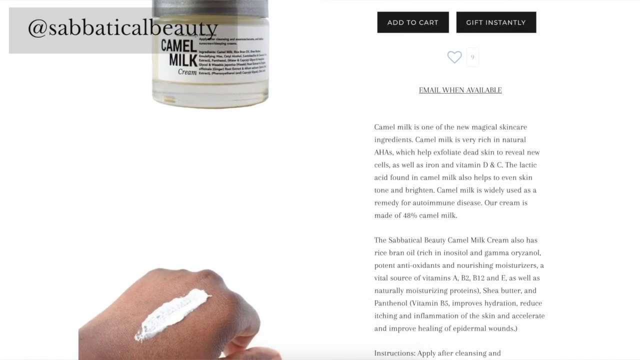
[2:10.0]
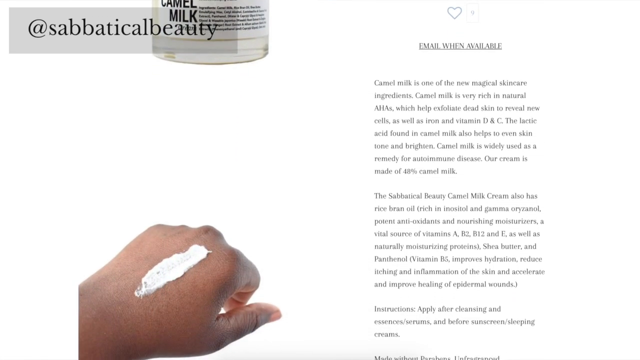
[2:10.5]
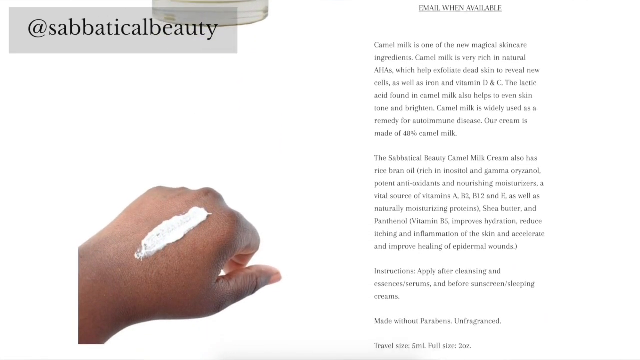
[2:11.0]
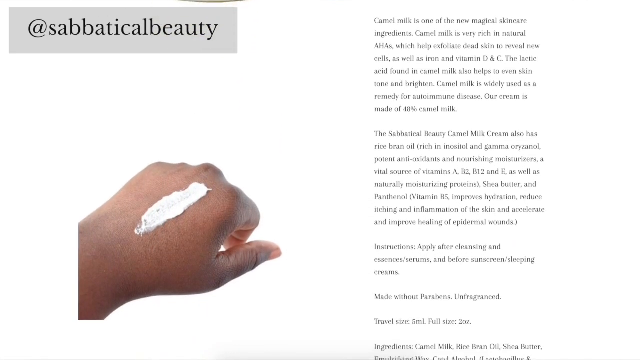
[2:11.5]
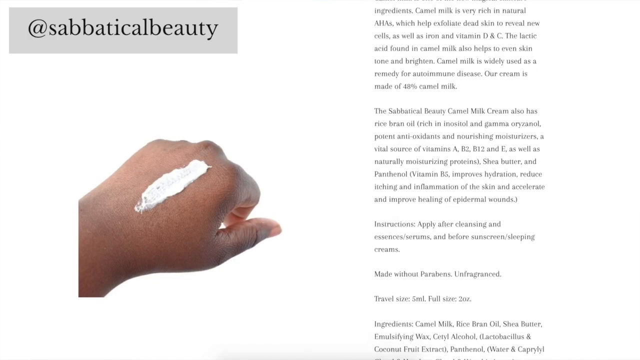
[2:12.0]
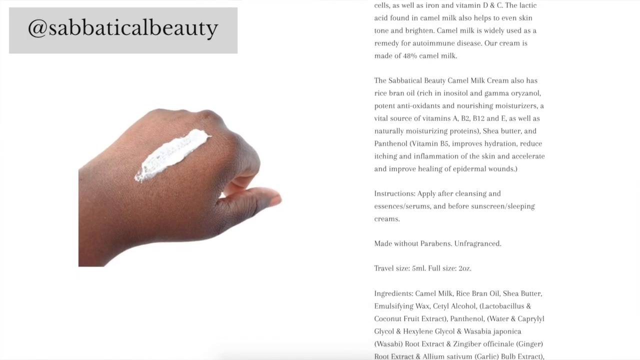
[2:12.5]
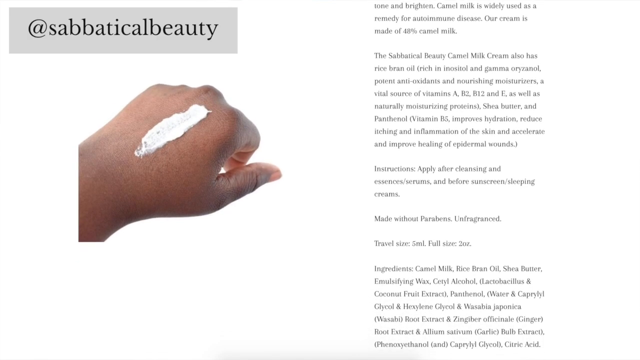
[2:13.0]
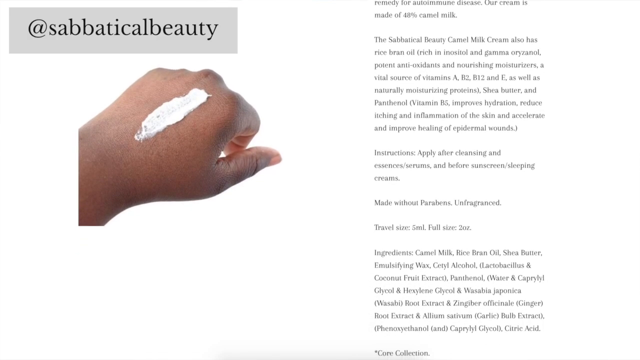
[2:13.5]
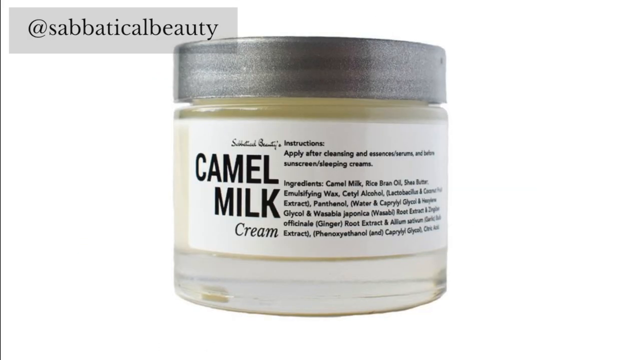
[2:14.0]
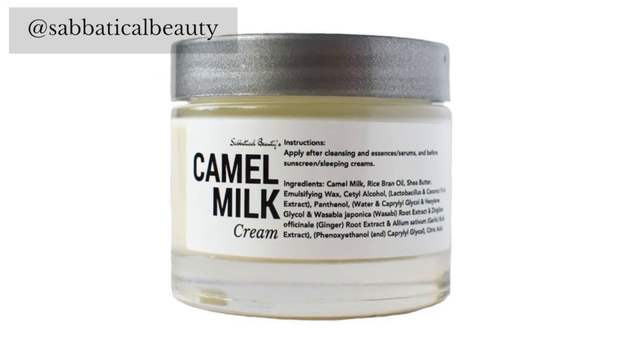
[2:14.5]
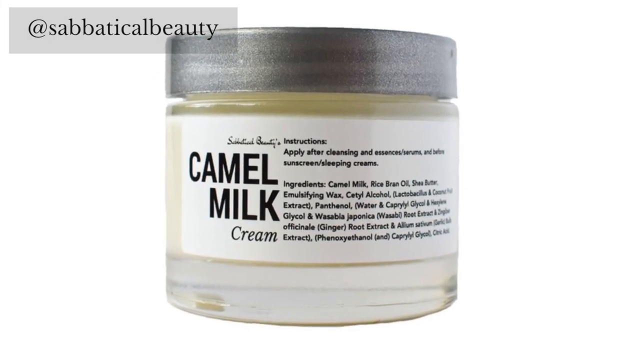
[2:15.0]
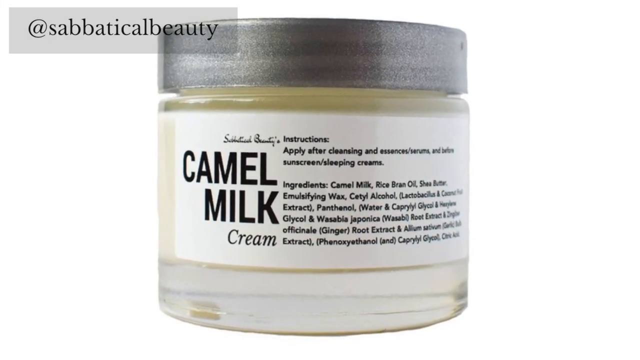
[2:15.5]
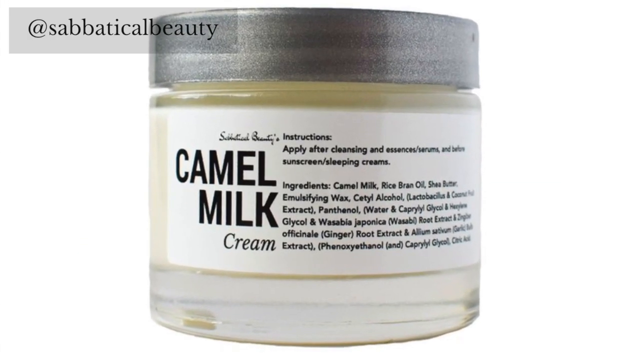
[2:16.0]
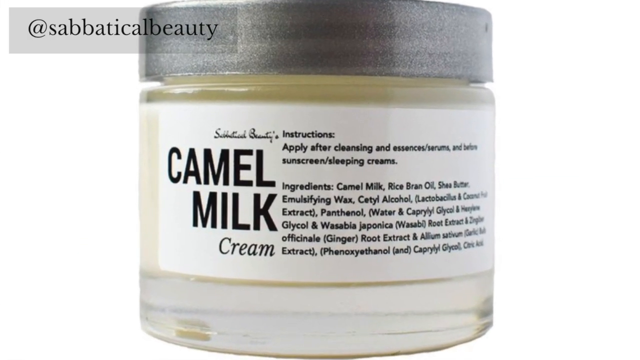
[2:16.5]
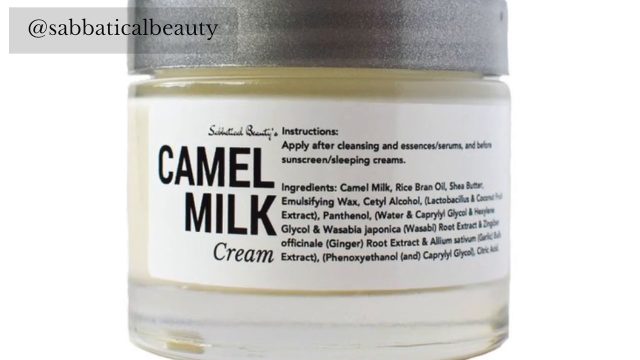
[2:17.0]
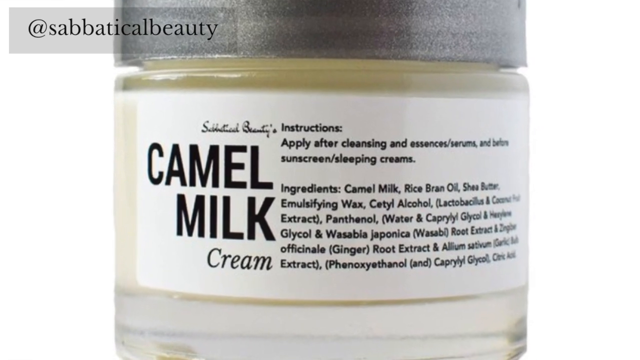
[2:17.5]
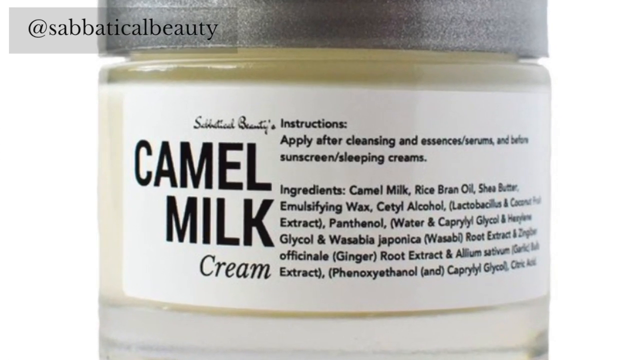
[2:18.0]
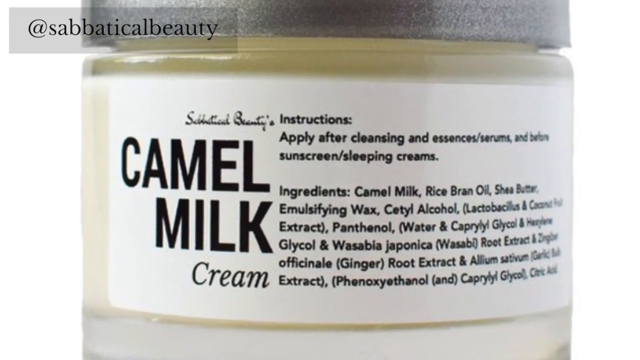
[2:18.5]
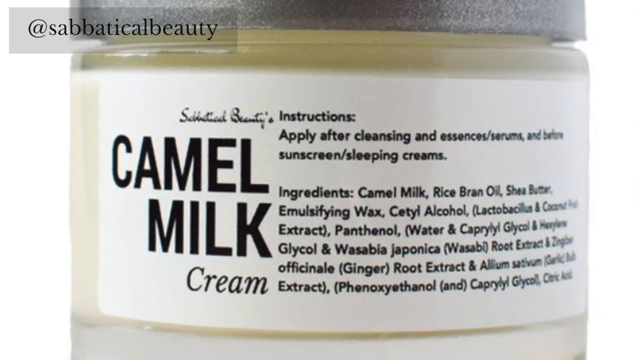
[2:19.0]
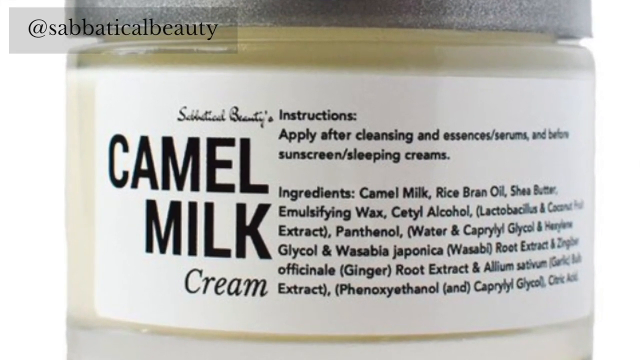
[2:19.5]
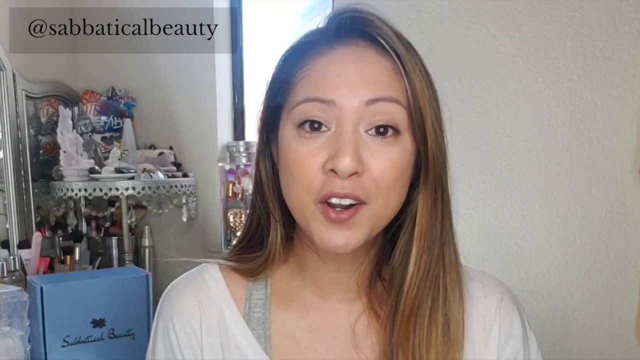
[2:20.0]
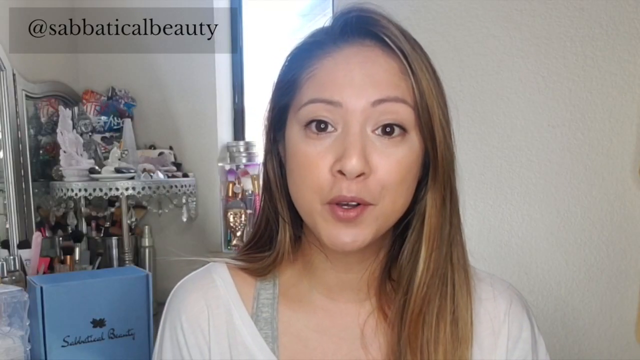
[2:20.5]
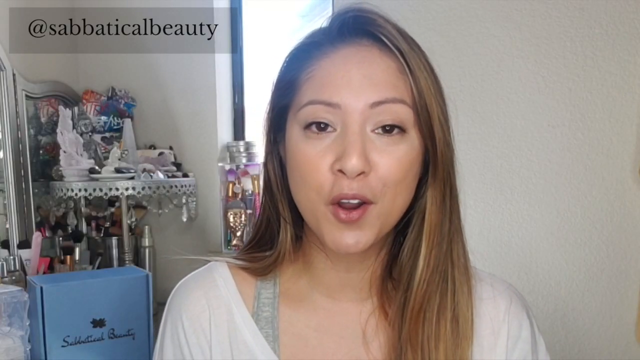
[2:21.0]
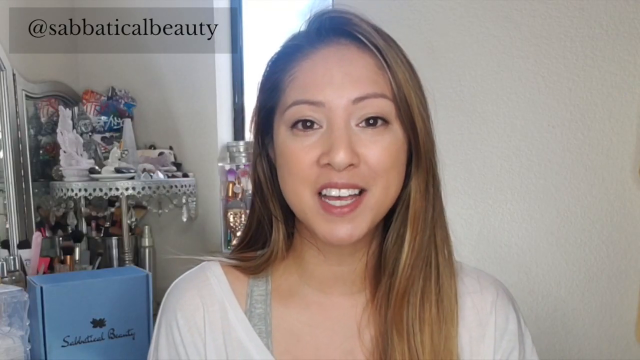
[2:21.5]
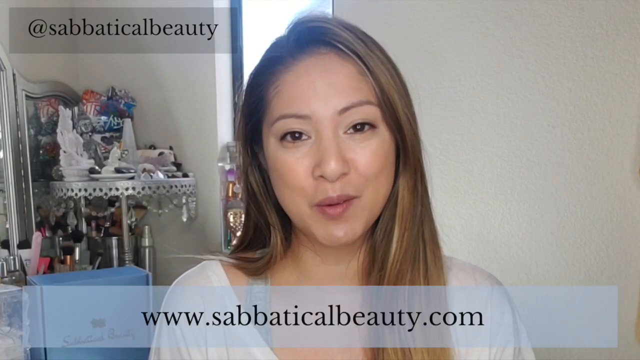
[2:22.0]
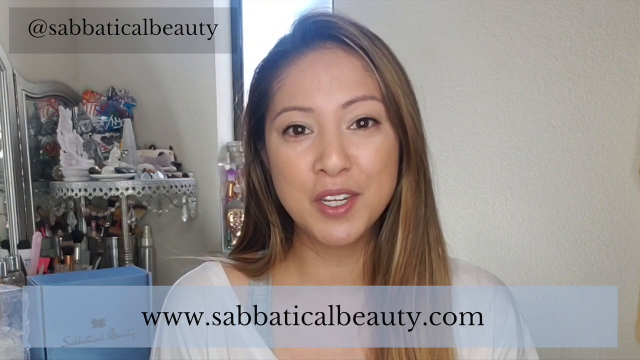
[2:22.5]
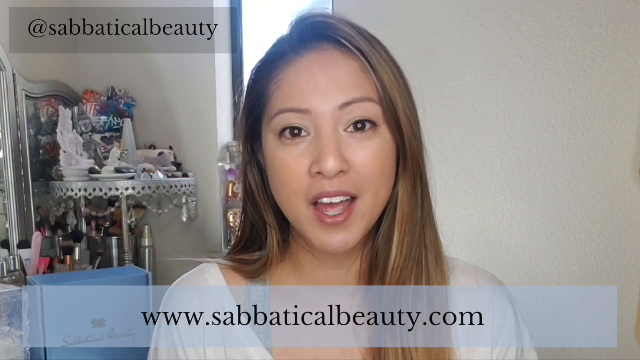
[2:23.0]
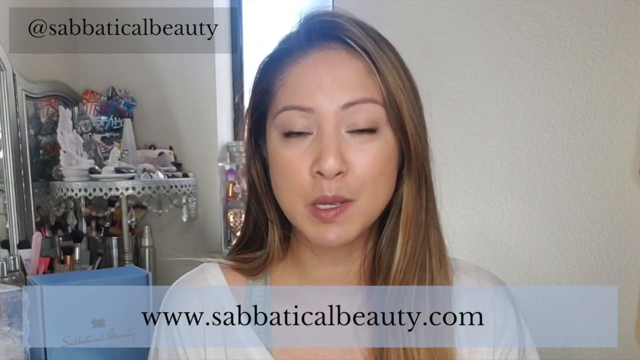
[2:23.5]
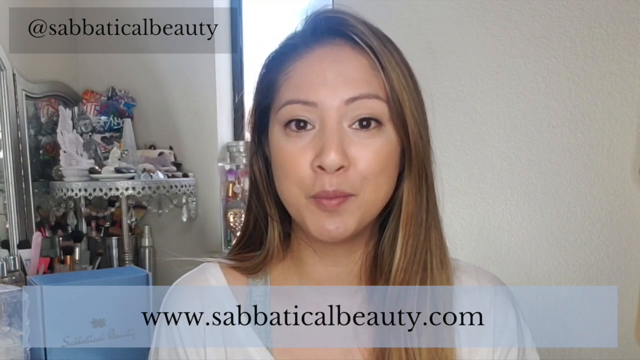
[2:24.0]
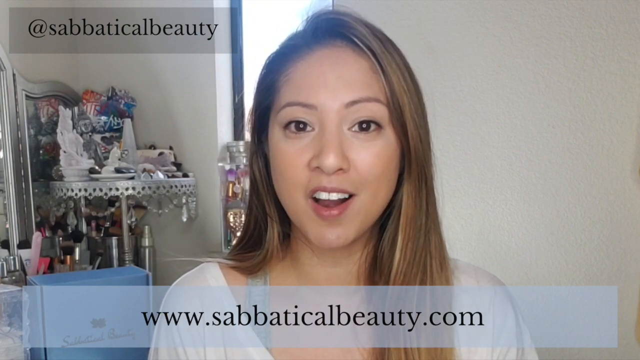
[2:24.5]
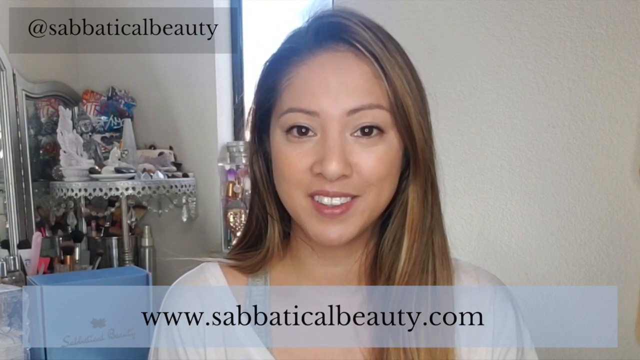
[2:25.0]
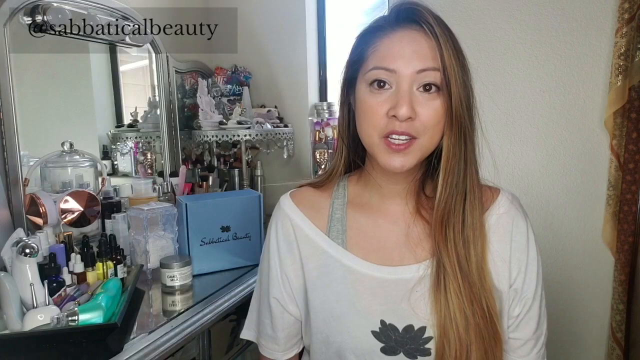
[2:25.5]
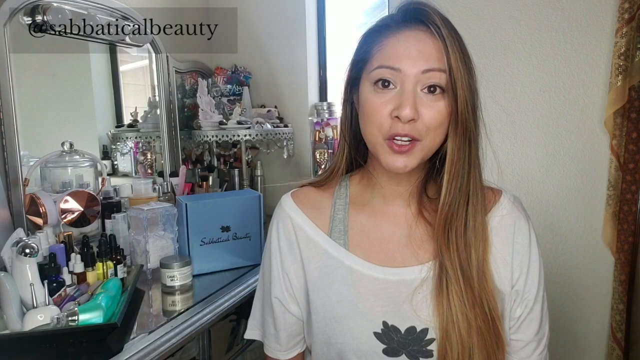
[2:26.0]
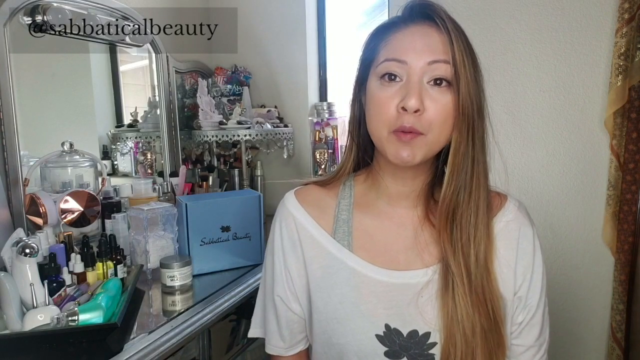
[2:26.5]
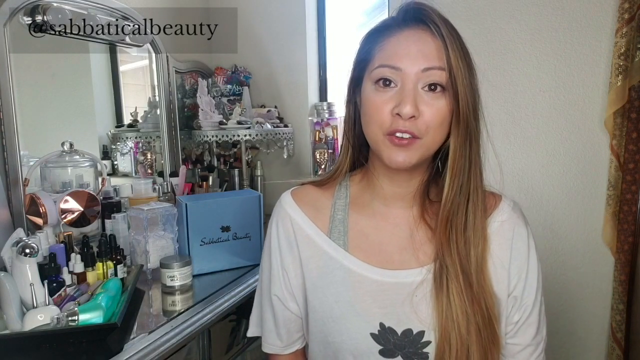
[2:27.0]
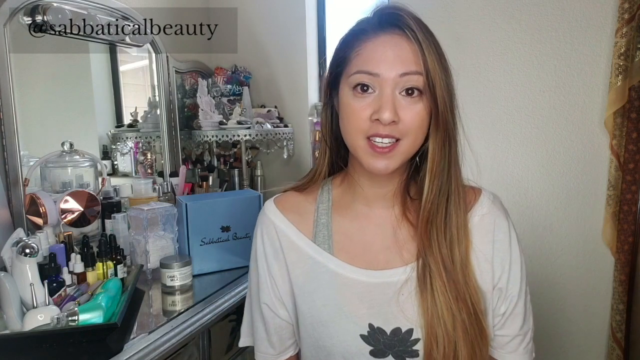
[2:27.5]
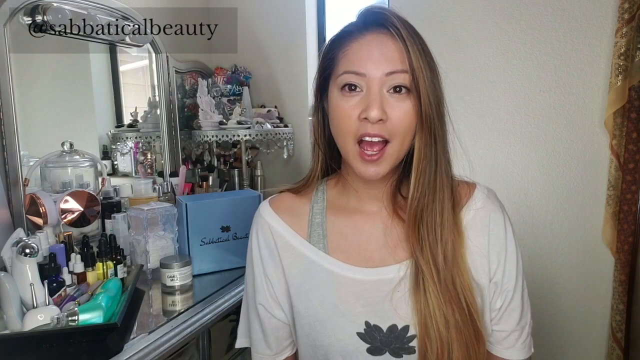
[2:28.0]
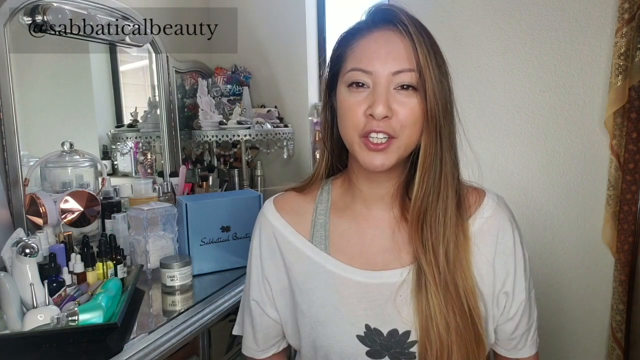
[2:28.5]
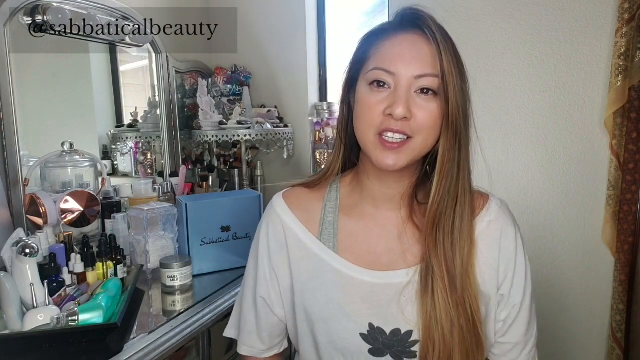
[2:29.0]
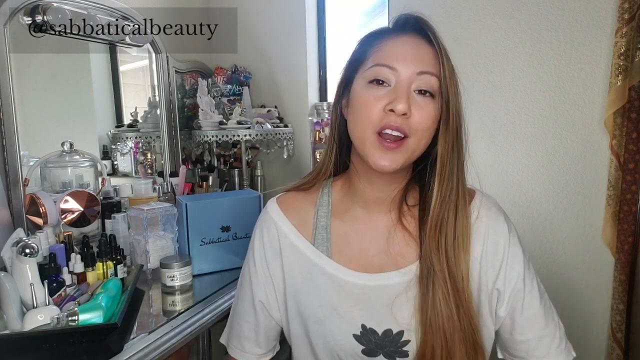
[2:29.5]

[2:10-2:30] A product labeled "camel milk cream" is shown in a small container; the cream looks yellowish inside. The instructions and the ingredients used to make the camel milk cream are also shown.